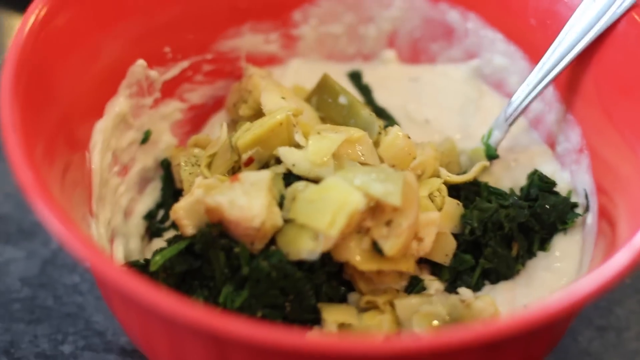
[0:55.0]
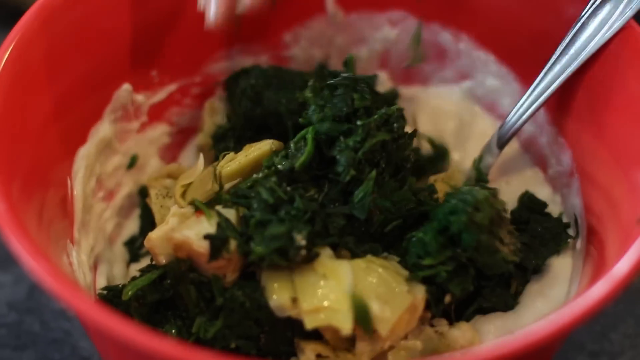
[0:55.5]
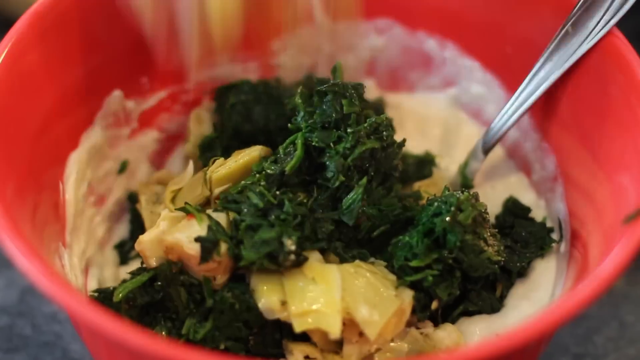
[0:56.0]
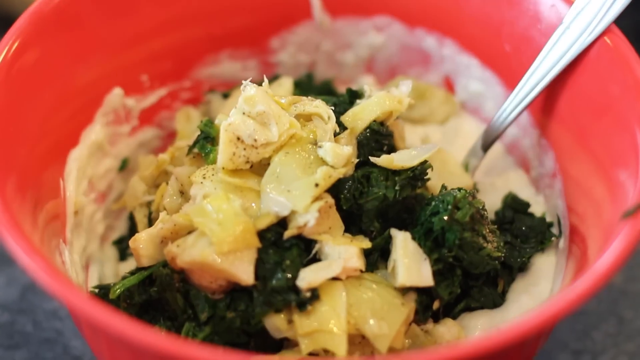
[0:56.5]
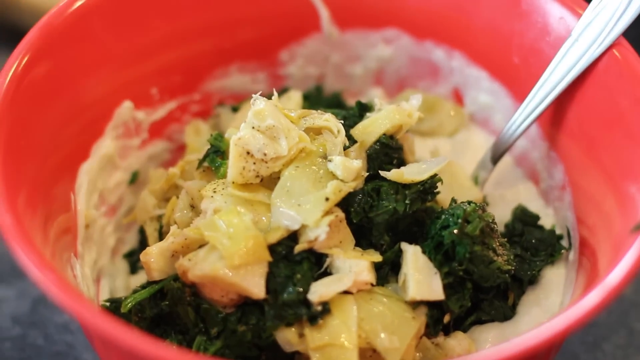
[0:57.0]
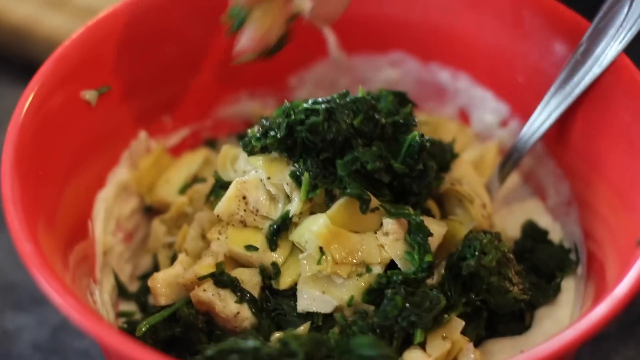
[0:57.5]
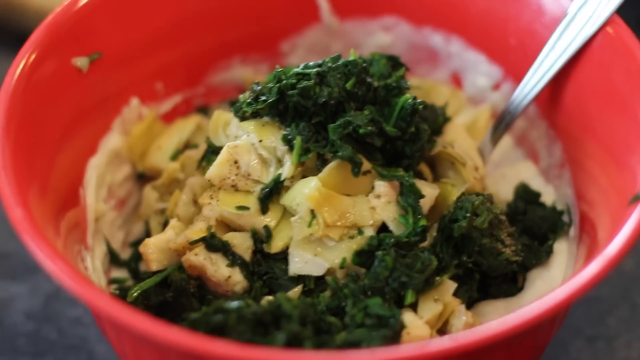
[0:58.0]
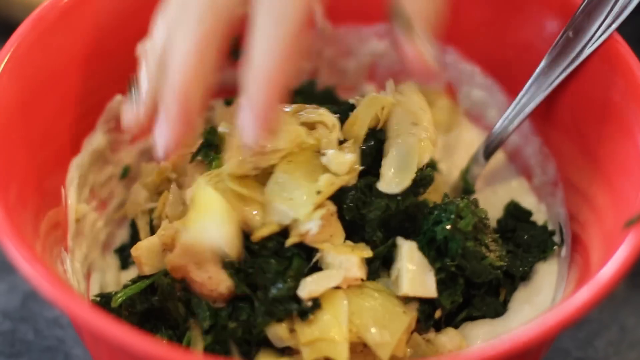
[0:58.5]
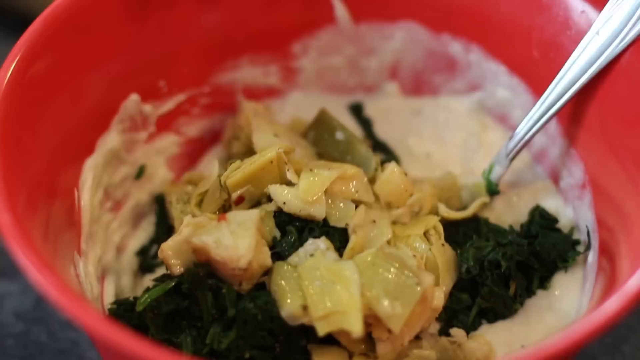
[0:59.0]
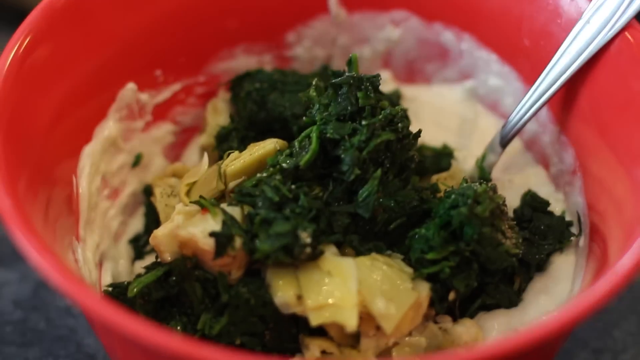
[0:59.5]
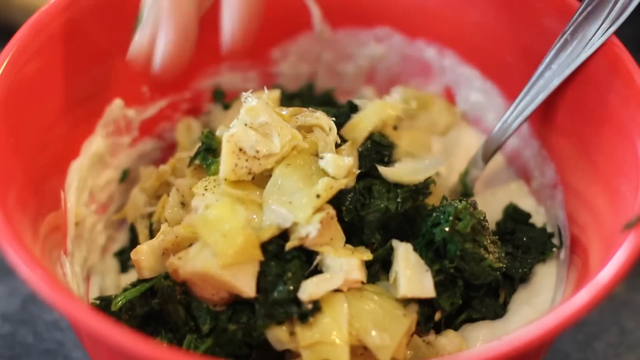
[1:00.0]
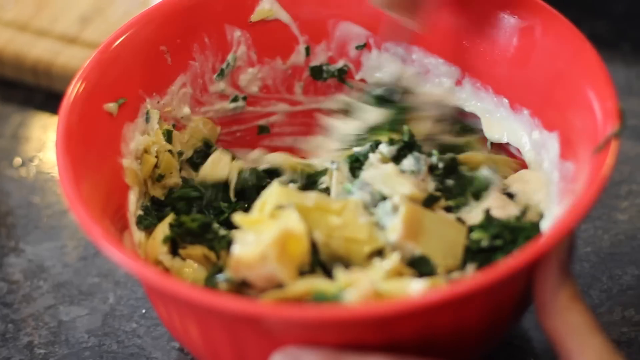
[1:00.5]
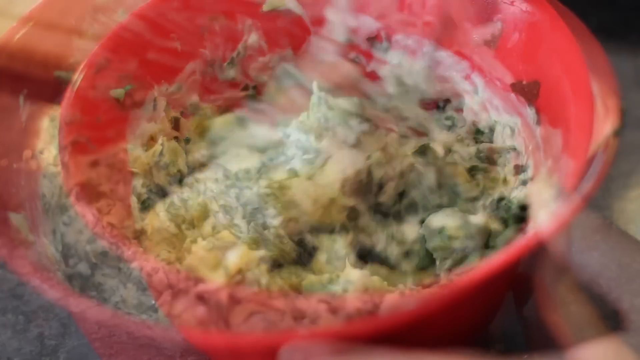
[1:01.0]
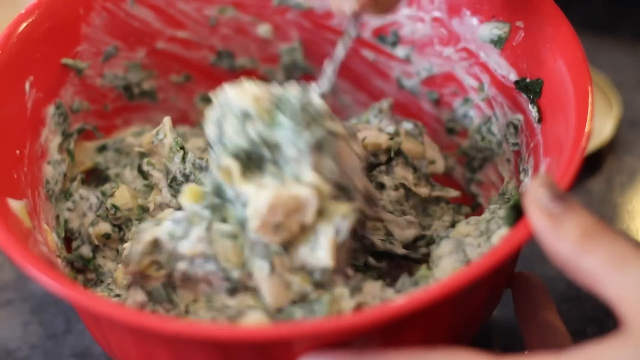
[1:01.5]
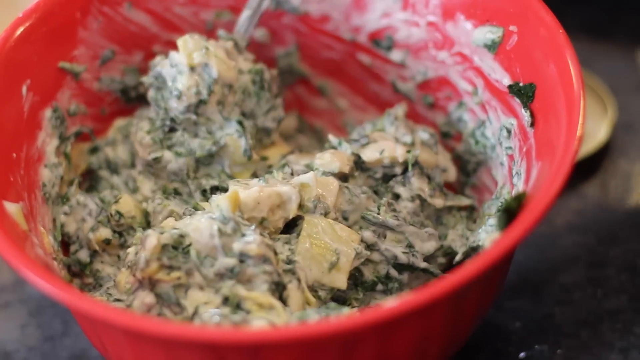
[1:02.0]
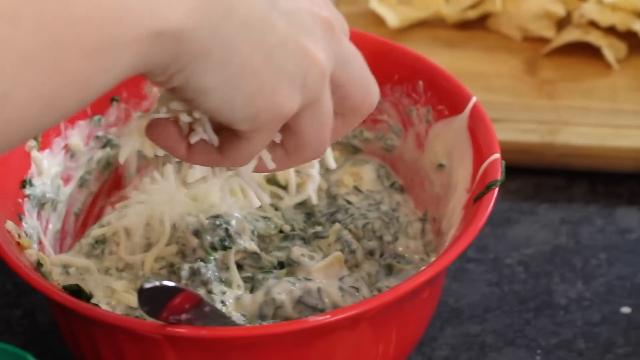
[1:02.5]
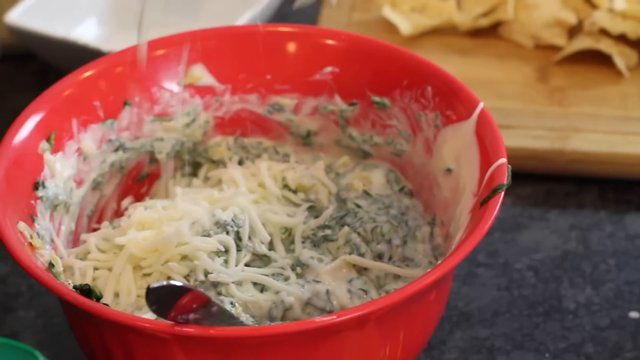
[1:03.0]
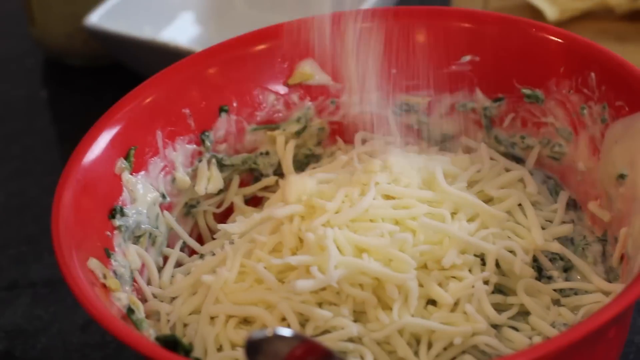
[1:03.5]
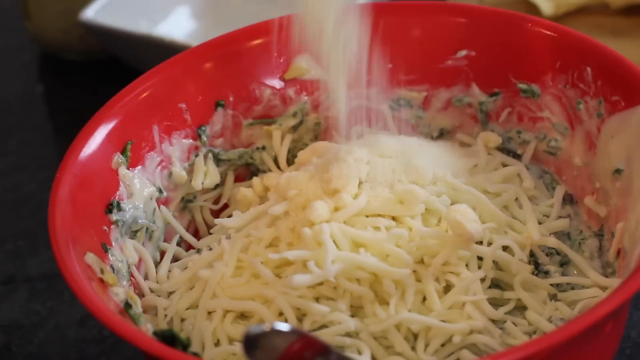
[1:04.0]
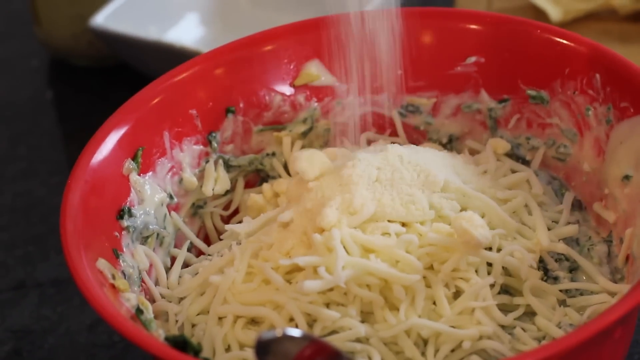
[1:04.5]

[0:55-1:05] Things are tossed into the red bowl and mixed. Shredded cheese and spinach go into the bowl by hand, then more shredded cheese, and everything is mixed with a spoon. At first the mixture looks a bit solid, but as it is mixed it becomes creamier. It is apparently the spinach artichoke dip being made. The setting is still the kitchen. The person making it is possibly a woman, as their nails appear to be painted.